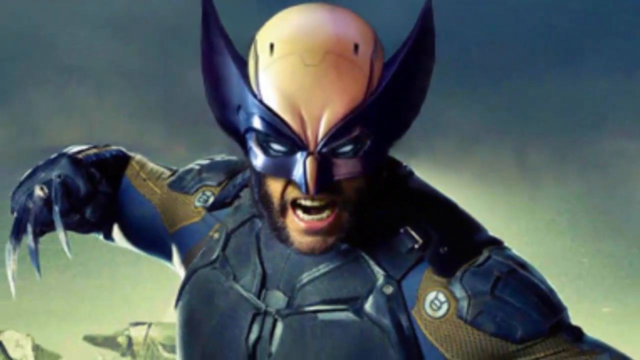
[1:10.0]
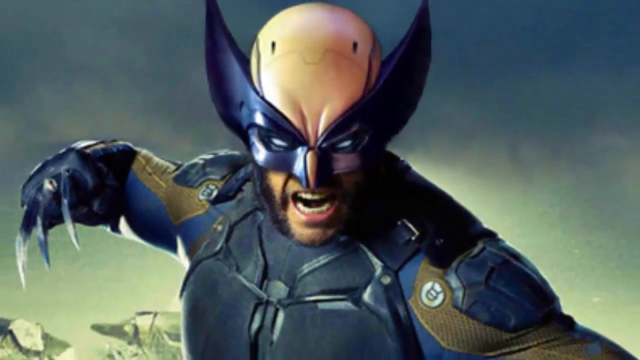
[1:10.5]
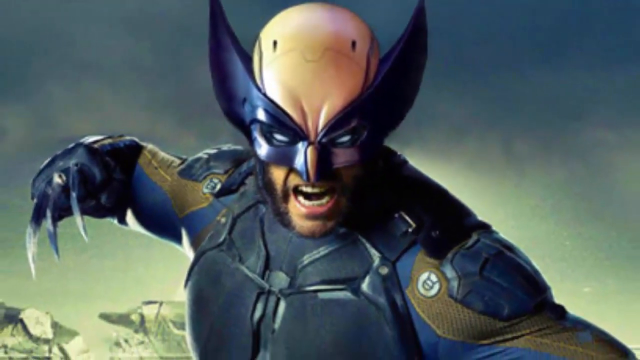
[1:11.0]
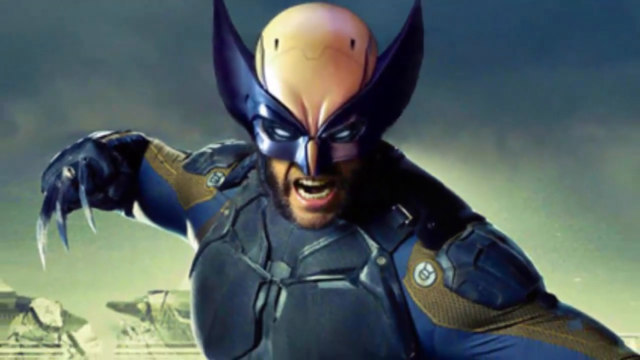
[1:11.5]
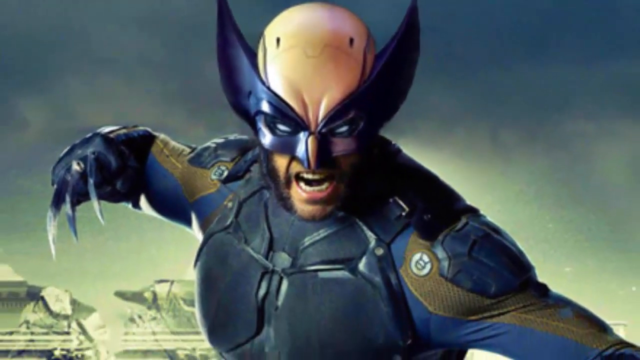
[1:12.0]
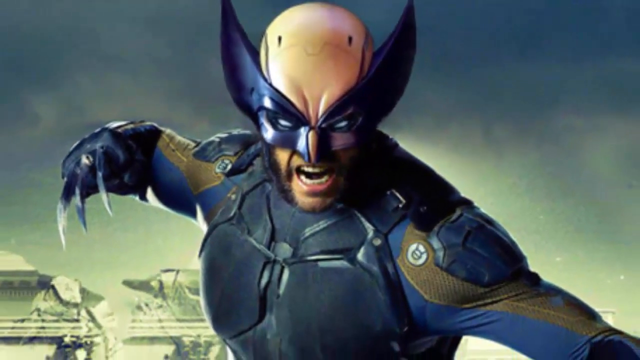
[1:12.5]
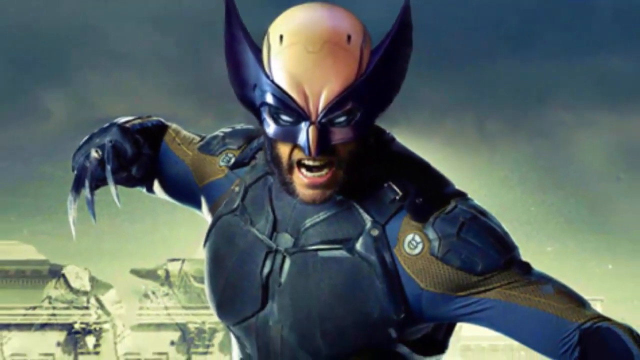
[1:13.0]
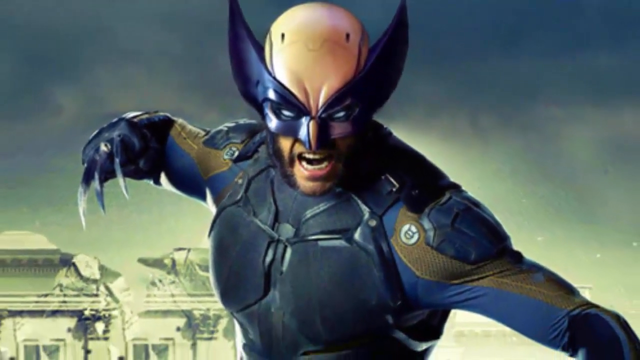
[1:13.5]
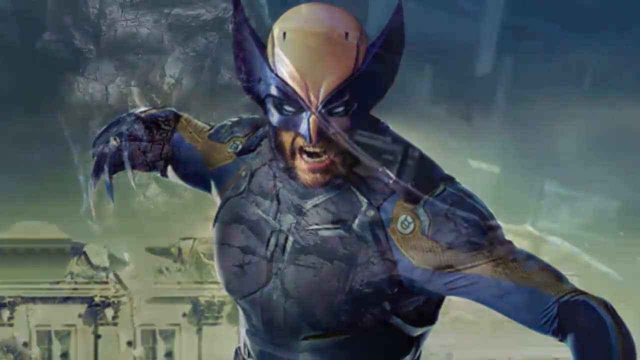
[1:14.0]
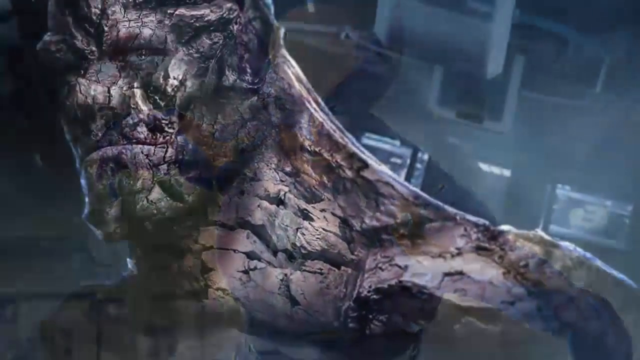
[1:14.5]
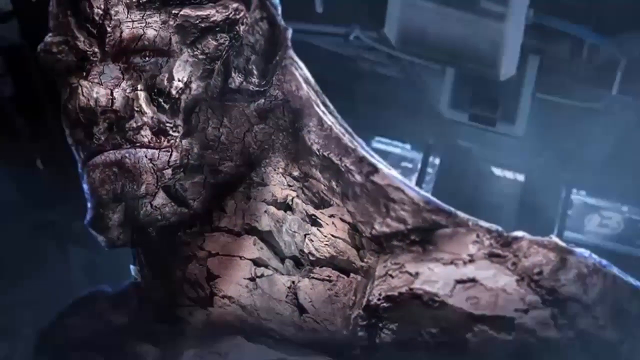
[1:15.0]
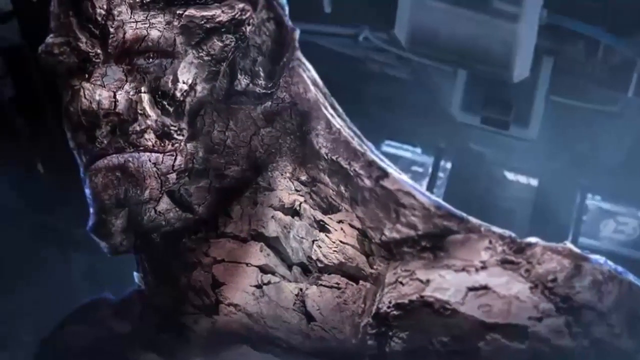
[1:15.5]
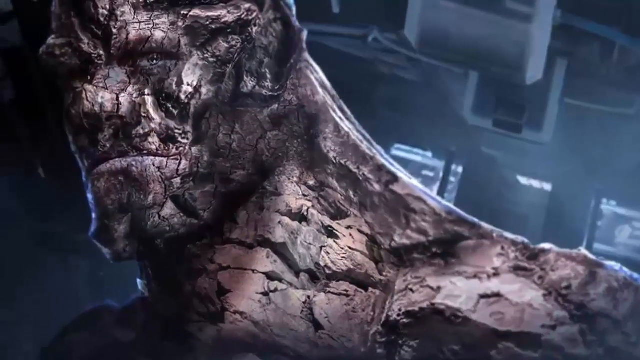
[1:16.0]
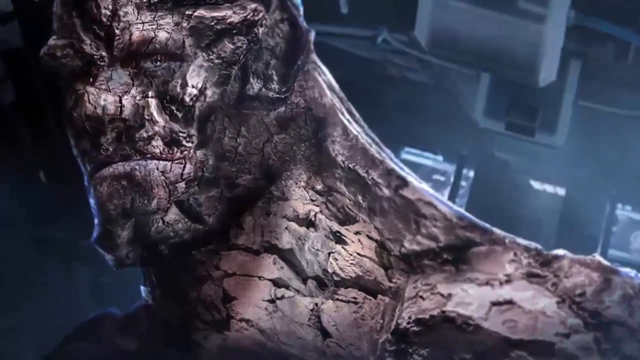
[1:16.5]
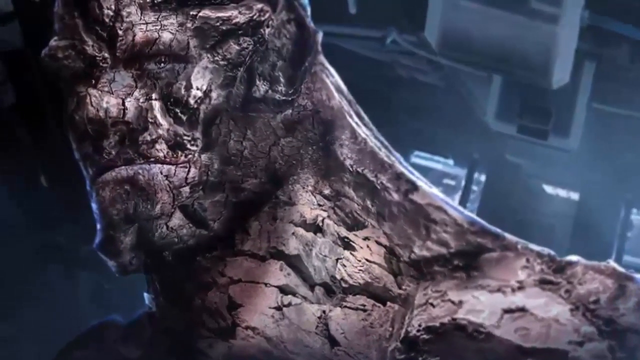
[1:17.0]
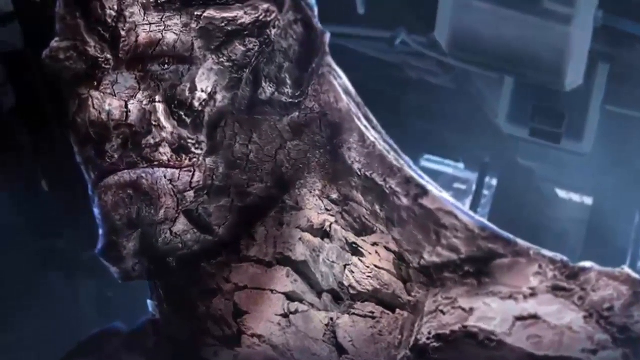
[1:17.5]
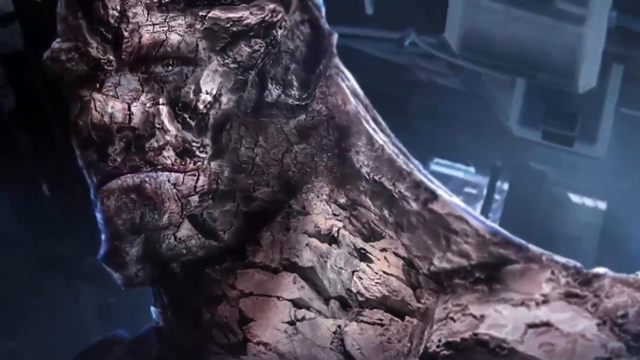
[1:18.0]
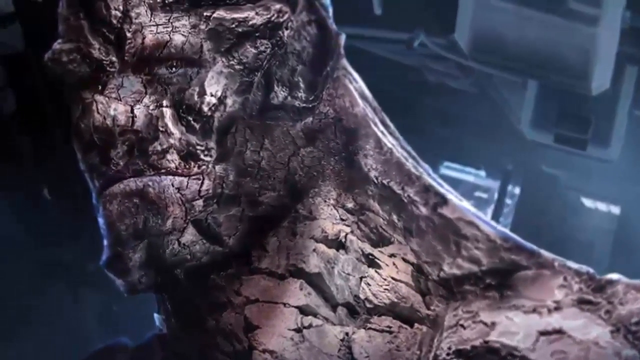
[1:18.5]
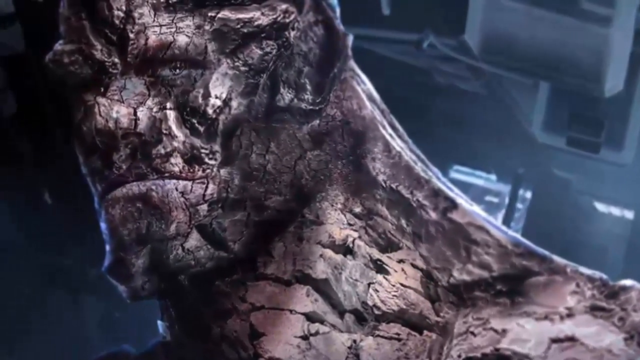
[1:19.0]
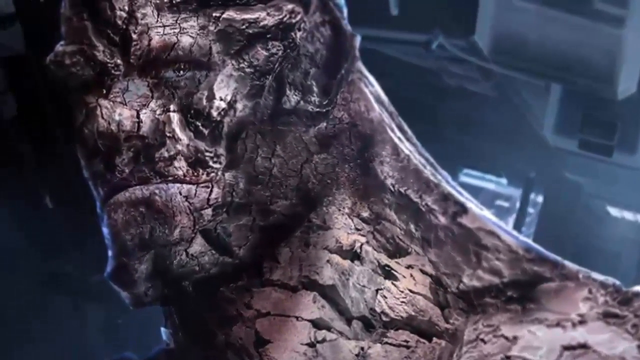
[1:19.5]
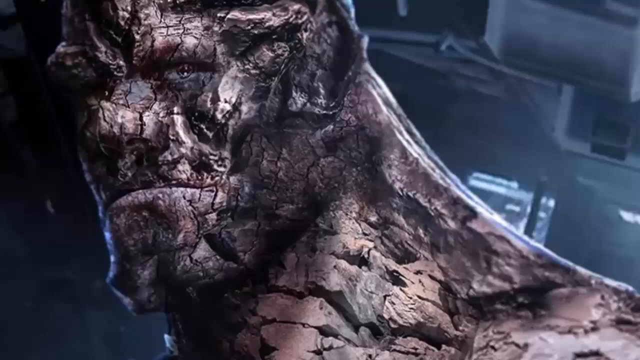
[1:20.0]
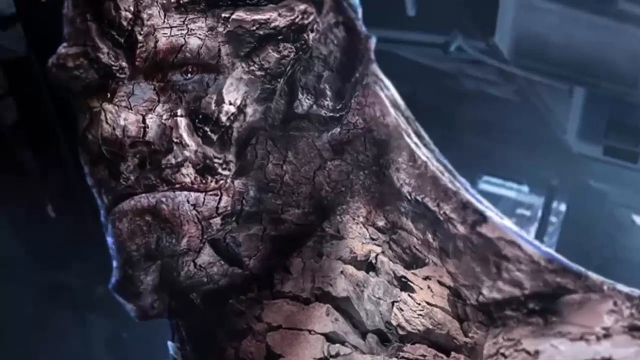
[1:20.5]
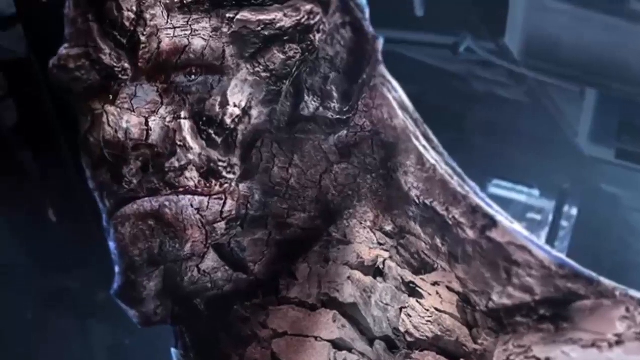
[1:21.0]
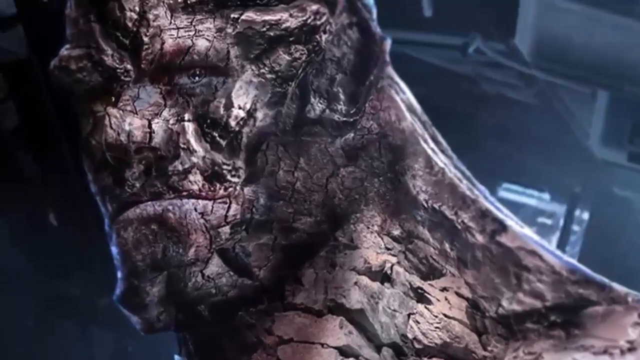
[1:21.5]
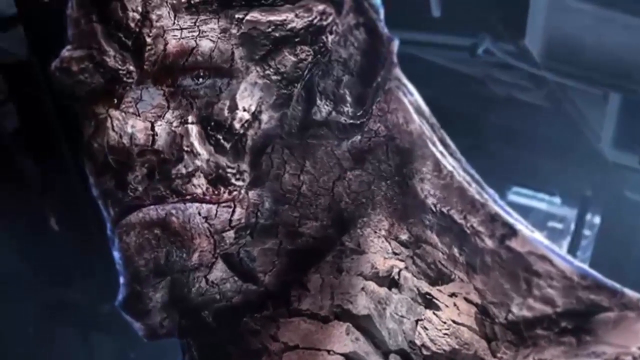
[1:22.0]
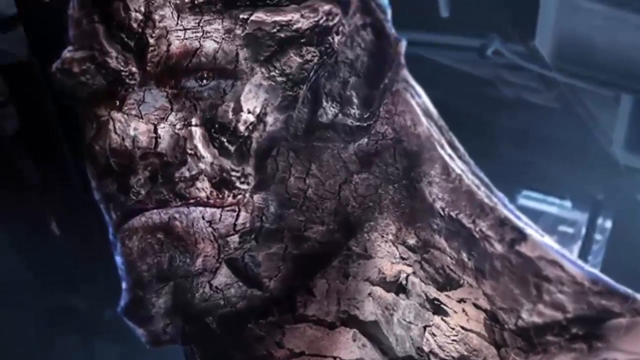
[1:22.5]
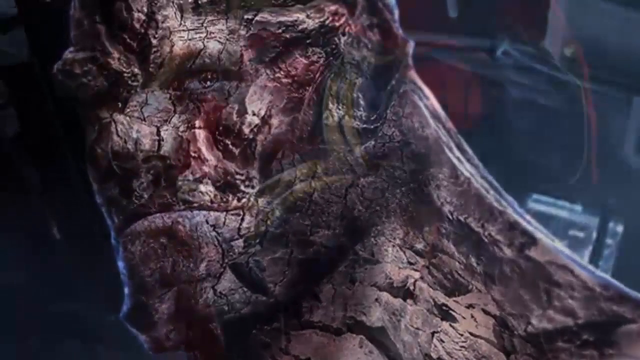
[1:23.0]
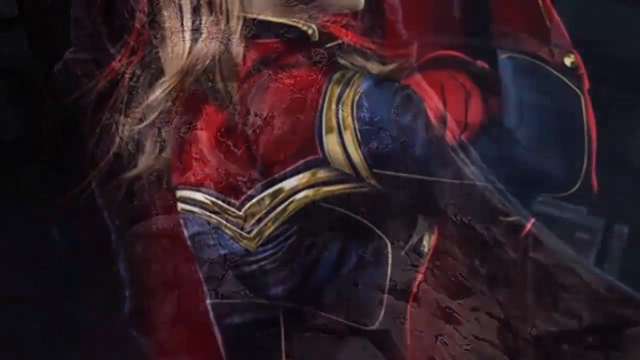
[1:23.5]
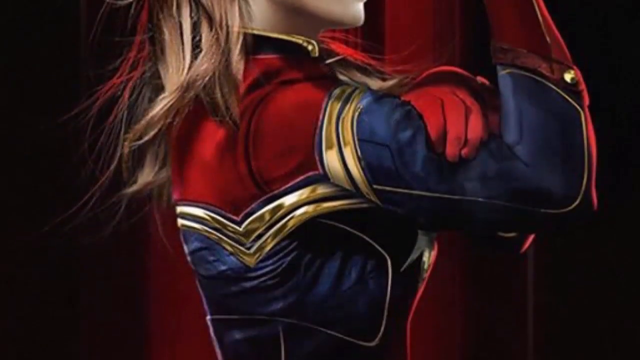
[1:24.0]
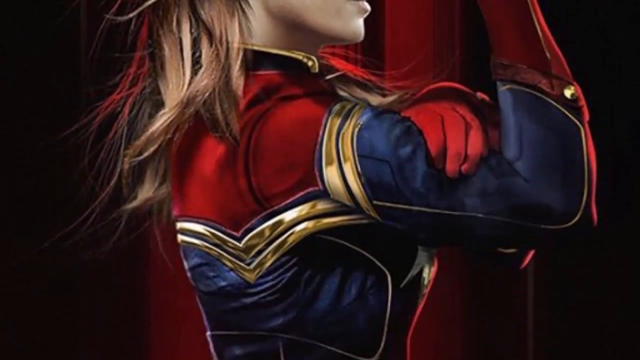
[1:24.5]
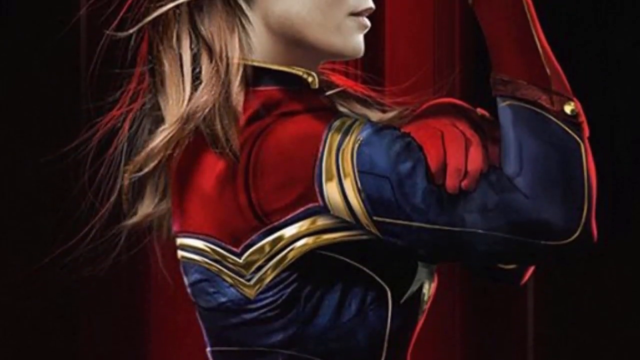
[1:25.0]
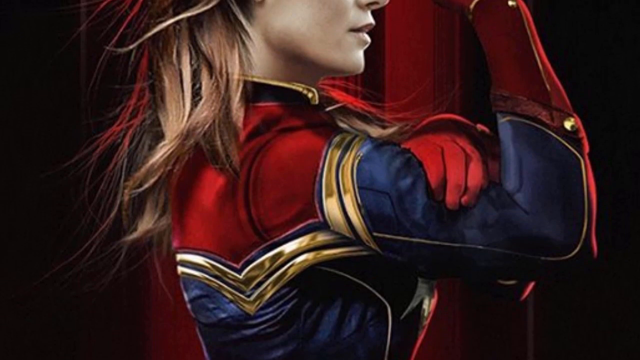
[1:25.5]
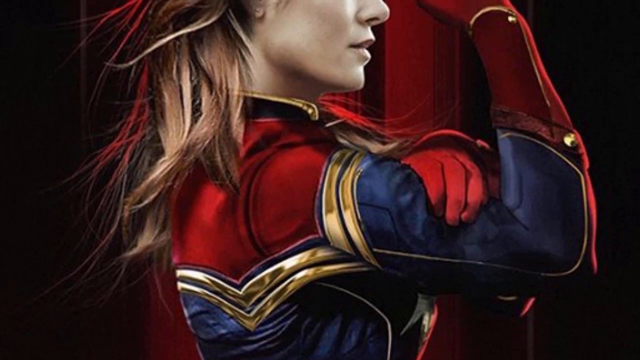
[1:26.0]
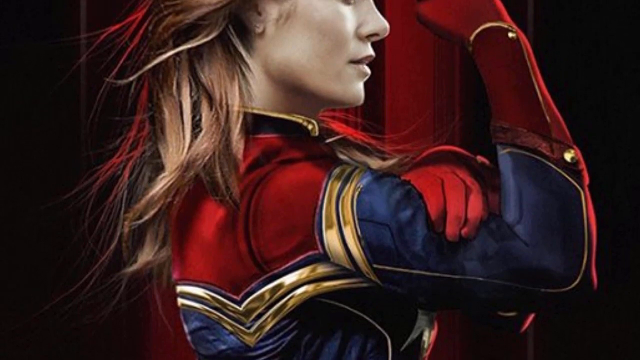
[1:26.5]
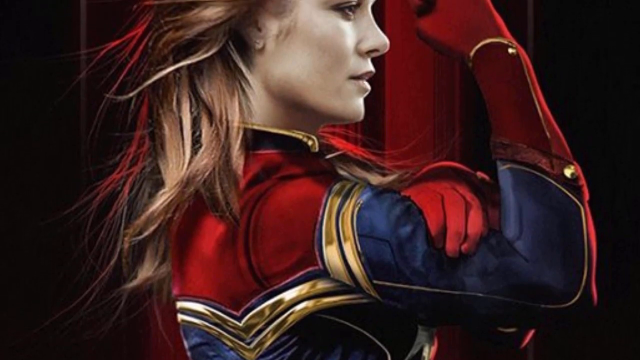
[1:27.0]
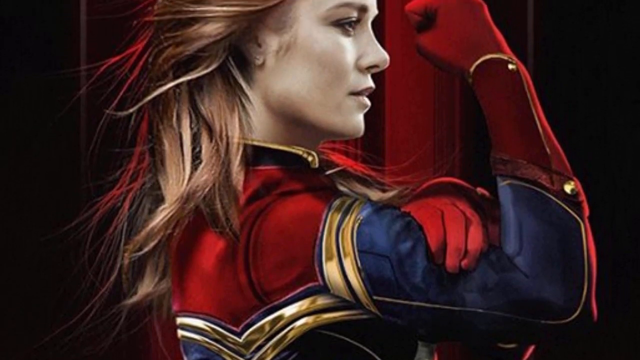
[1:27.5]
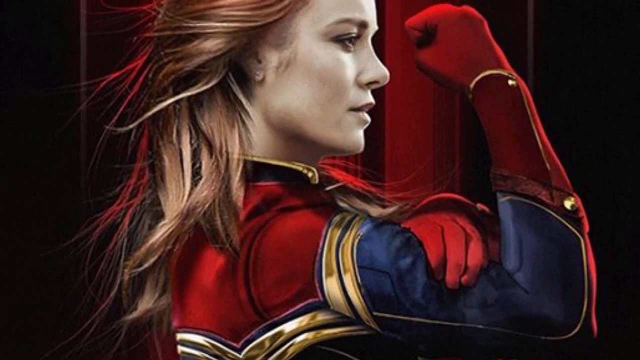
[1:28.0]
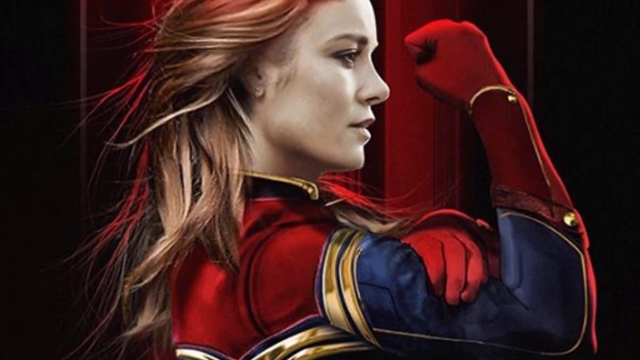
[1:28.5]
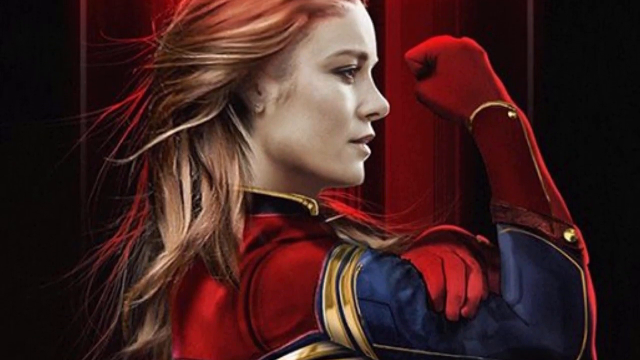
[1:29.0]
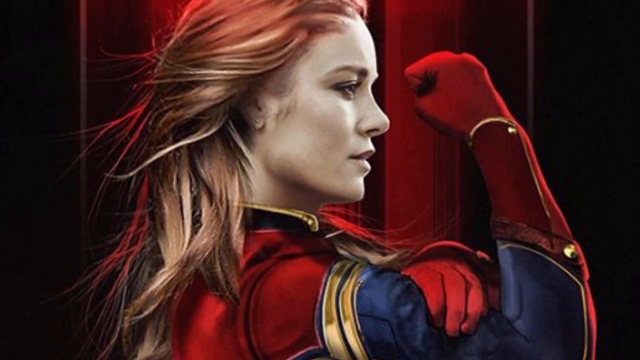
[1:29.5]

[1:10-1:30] An image shows Wolverine attacking something. He is in his traditional uniform and looks very angry. Behind him are some type of buildings or perhaps tanks; it is hard to tell. The next image is of the superhero who looks like a rock, standing behind a very dark scene, maybe the inside of some type of laboratory. The view moves closer and closer to his face until it is almost looking directly into his eye. Then comes a female superhero, a white woman with strawberry blonde hair reaching the middle of her back. Her outfit, possibly Wonder Woman's or a Spider-Woman's, is red with gold stripes and blue accents. She has on gloves that cover her hands and stands behind a red background.